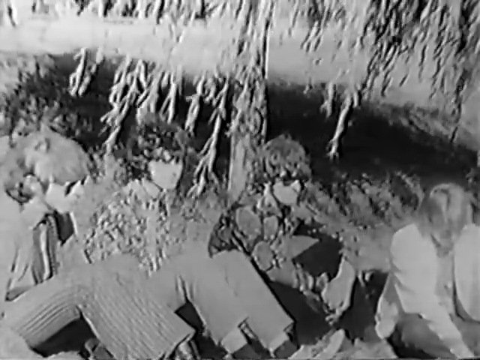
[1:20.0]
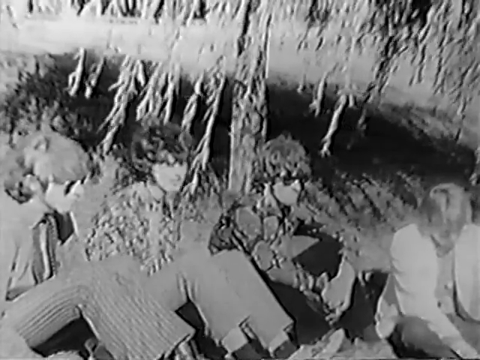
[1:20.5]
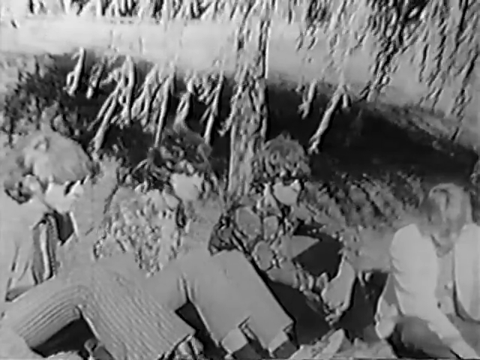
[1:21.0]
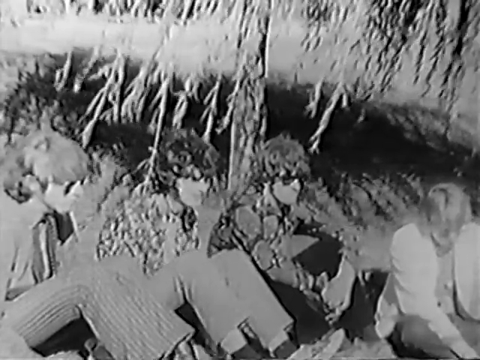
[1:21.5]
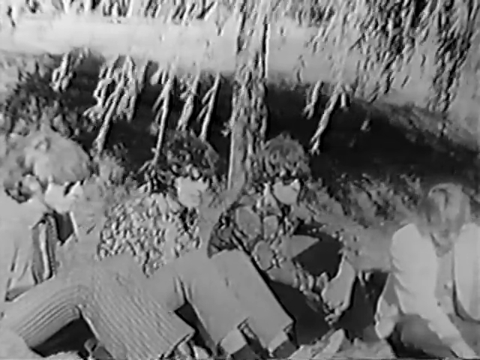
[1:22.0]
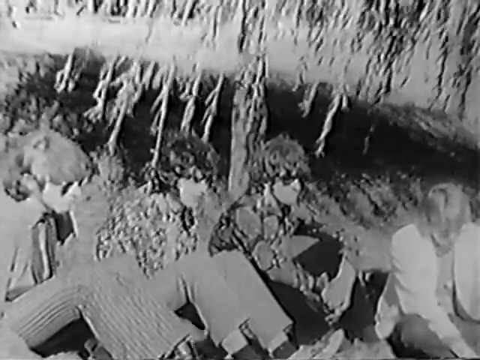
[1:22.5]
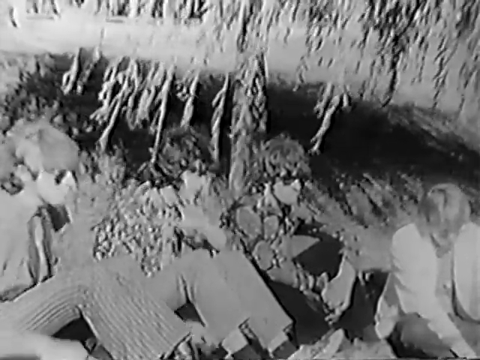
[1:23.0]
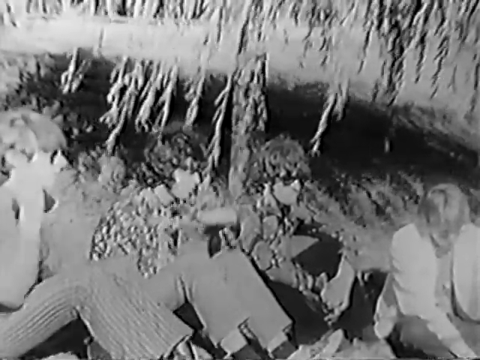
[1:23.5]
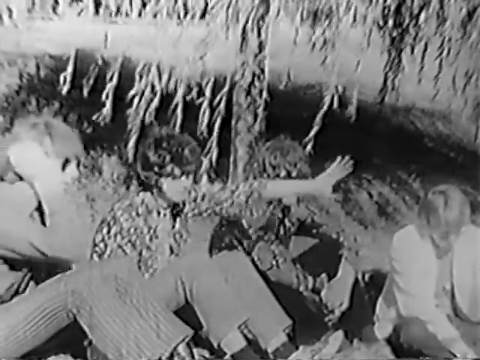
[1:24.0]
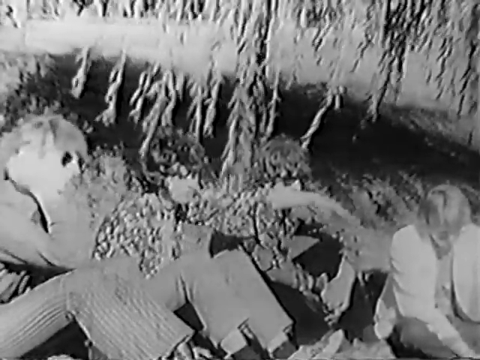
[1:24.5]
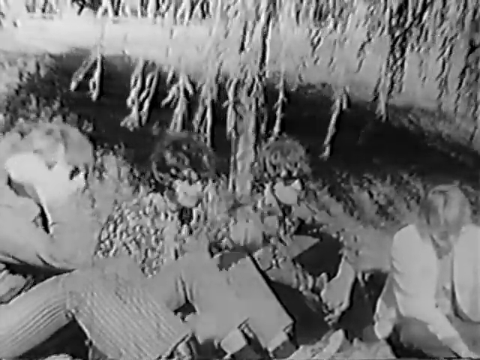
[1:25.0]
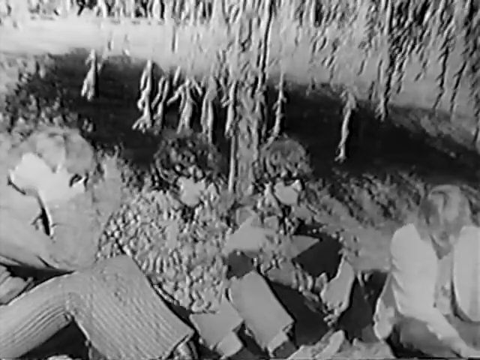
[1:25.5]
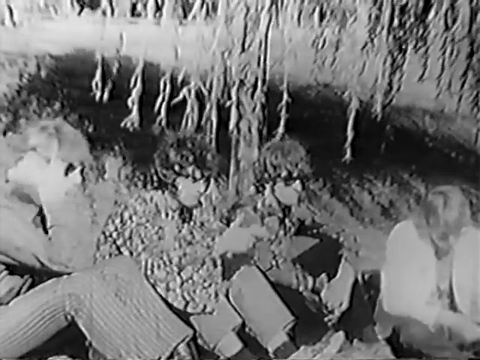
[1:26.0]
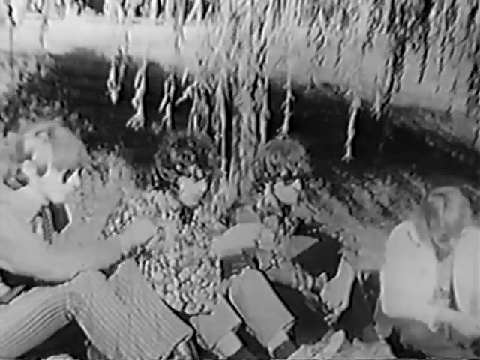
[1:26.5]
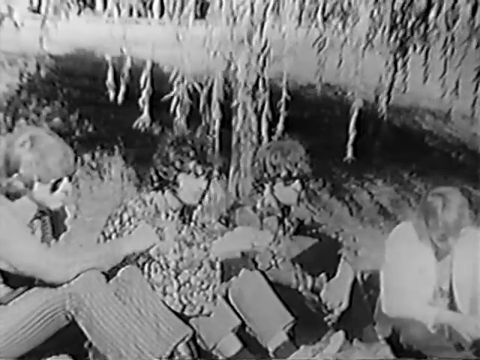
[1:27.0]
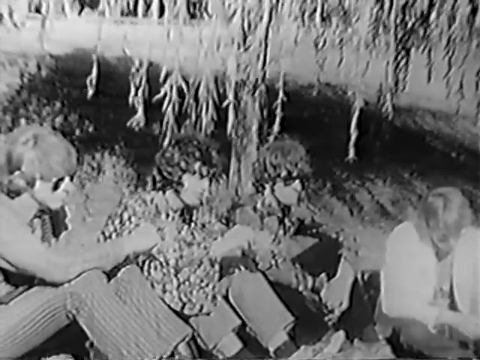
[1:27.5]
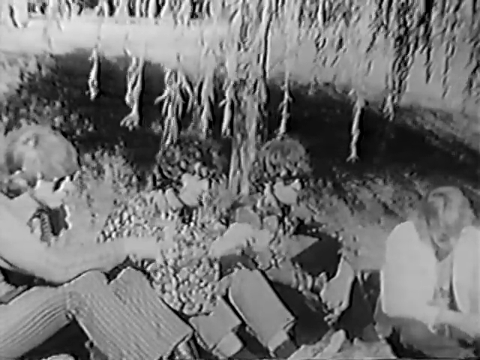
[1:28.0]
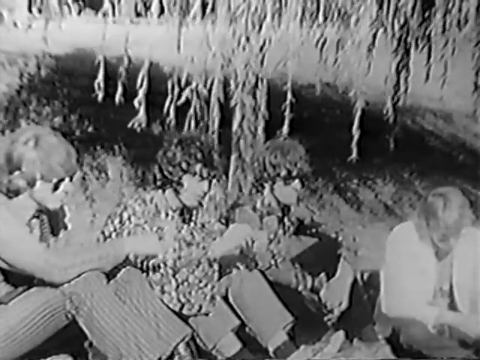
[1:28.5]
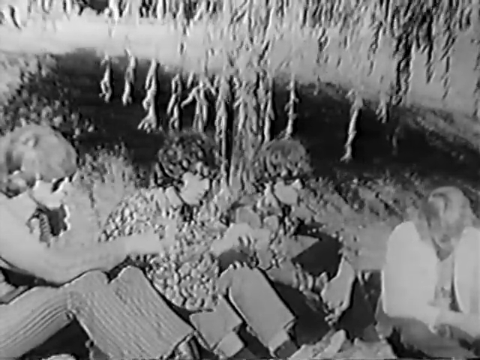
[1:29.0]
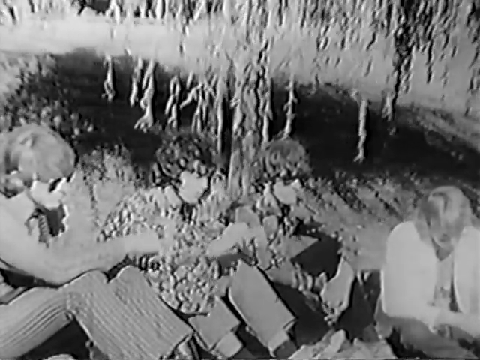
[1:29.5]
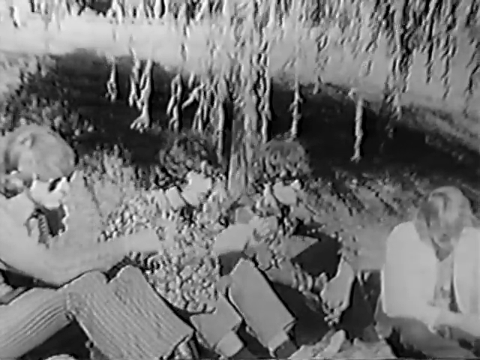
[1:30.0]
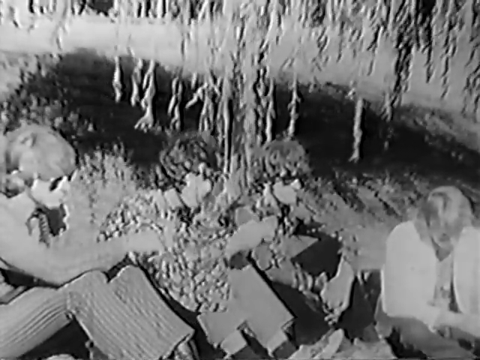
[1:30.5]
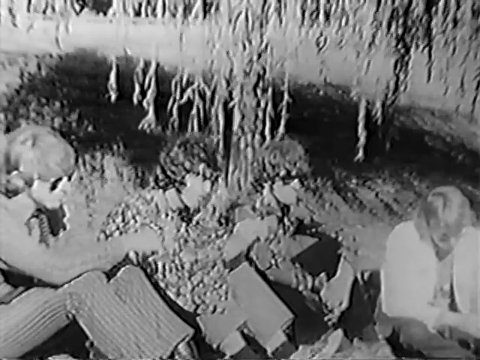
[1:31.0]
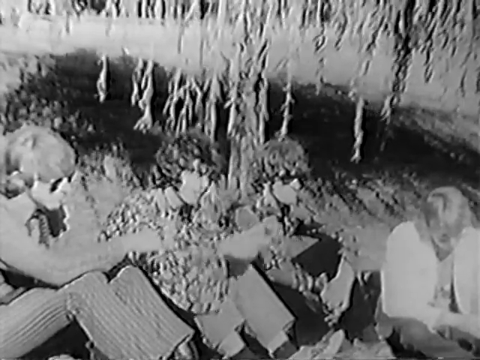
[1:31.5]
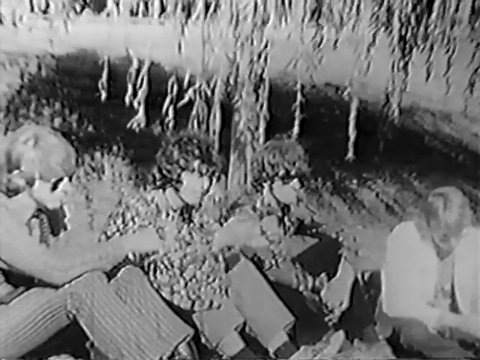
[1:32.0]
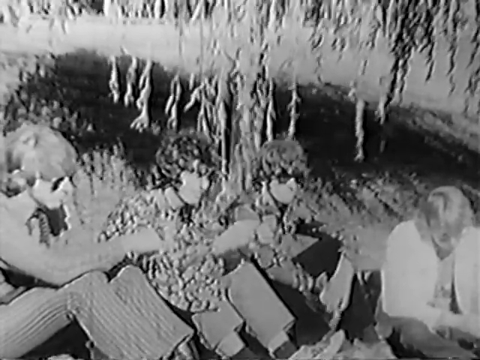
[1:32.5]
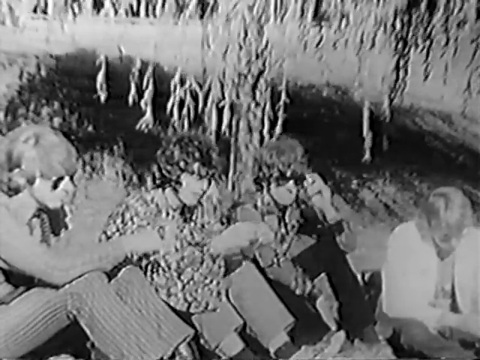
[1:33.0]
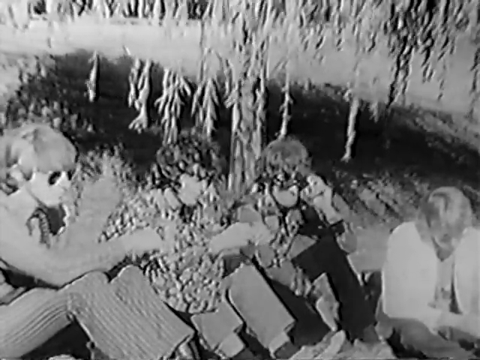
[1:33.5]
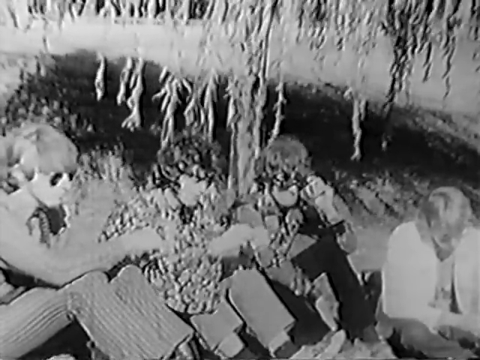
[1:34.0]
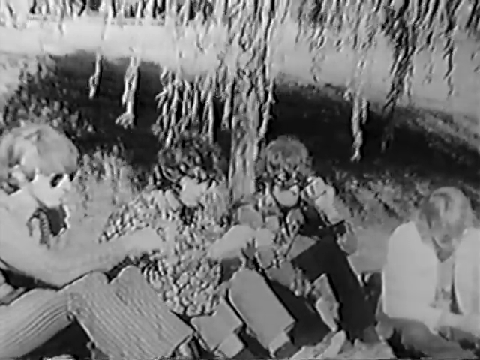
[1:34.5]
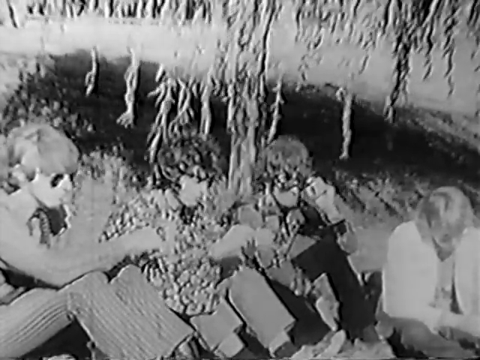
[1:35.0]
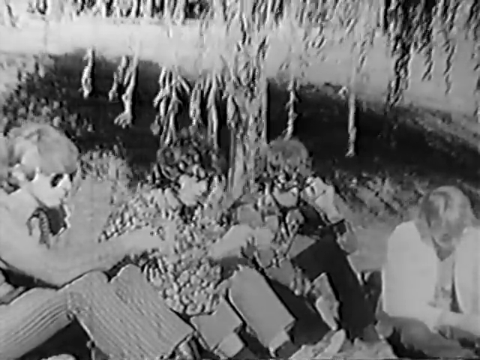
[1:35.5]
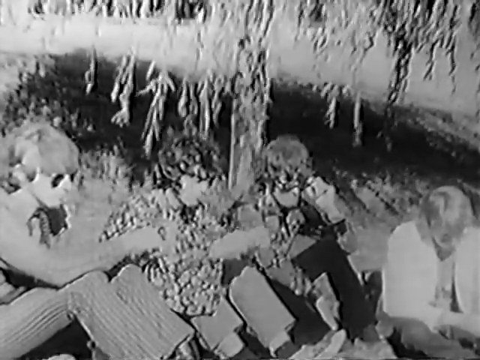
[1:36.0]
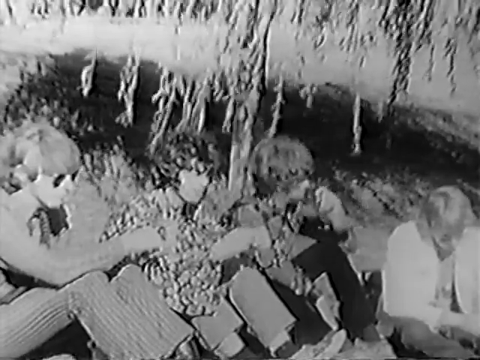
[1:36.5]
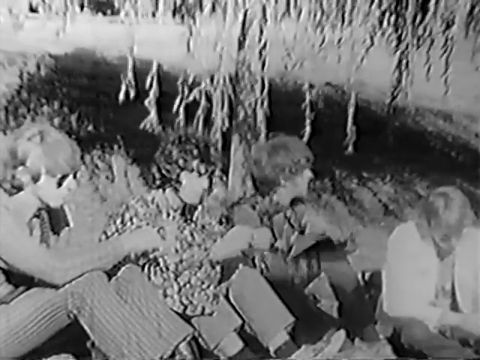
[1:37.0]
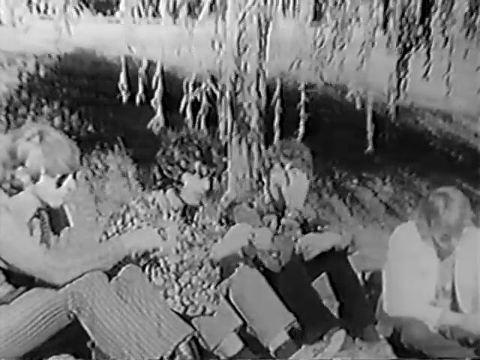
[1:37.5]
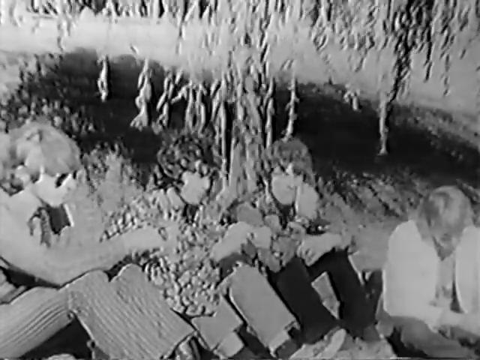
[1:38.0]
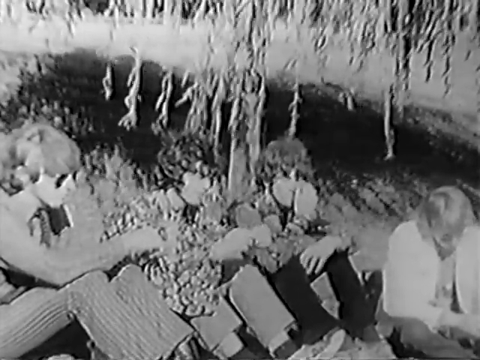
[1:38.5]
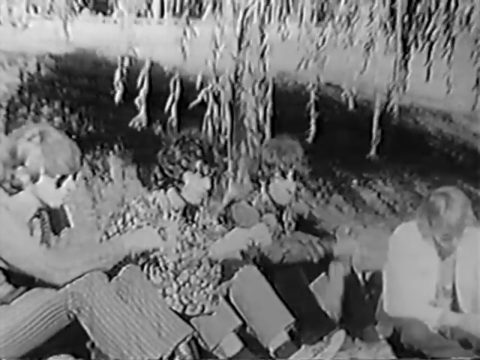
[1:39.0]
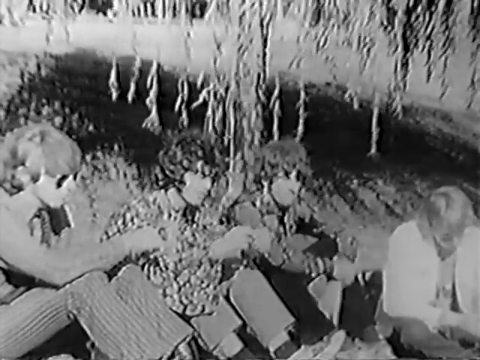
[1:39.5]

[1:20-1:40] The four individuals continue on the hill. The man who is on the left of the screen puts his right hand up to his face at one point. The person in the middle is fiddling with maybe a blade of grass, and the man next to him on the right of the screen also puts his hands up; they seem a little fidgety. The man in the middle gestures with his left hand in front of him and flings his arm out while talking, while the man to his right puts his hand up to his face. He then starts to fiddle with the blade of grass in front of him. The man to the middle man's left, on the right of the screen, takes his glasses with his left hand and puts them down, looking over them, then takes them off entirely and with his right hand brushes his bangs over to the left. He then clasps his hands again in front of his knees. They all sit with bent knees on the hillside.